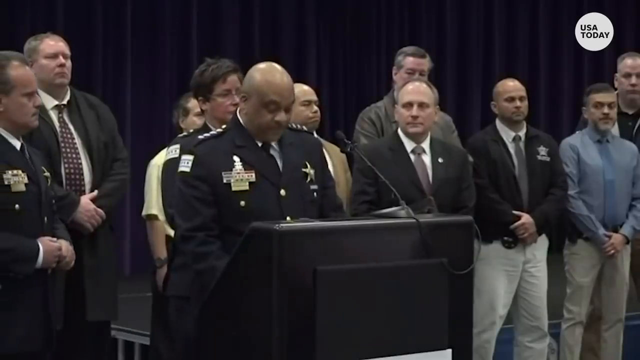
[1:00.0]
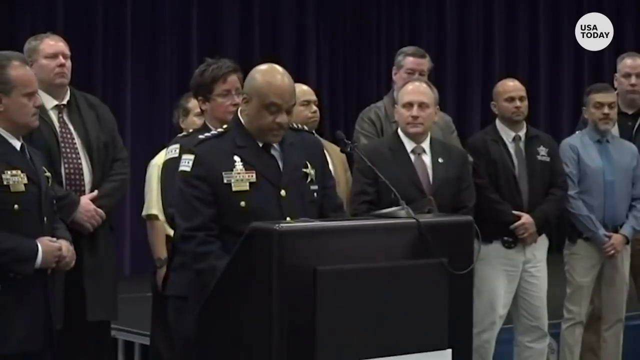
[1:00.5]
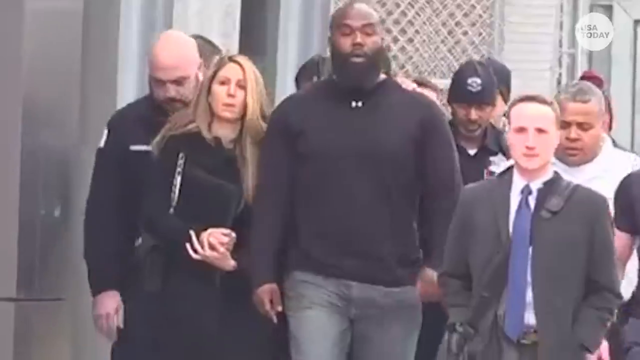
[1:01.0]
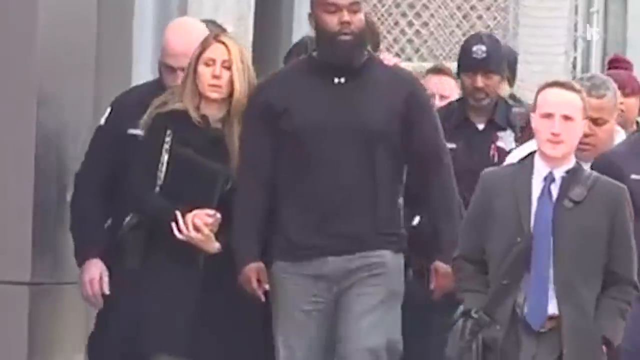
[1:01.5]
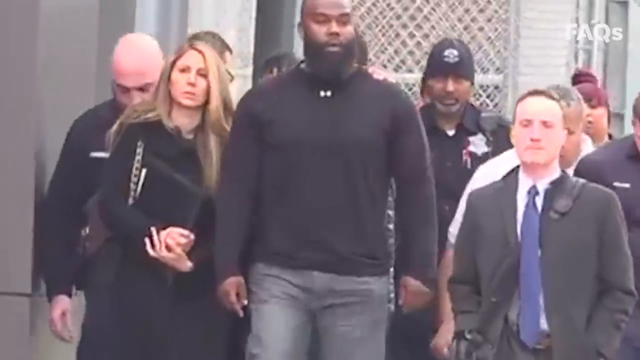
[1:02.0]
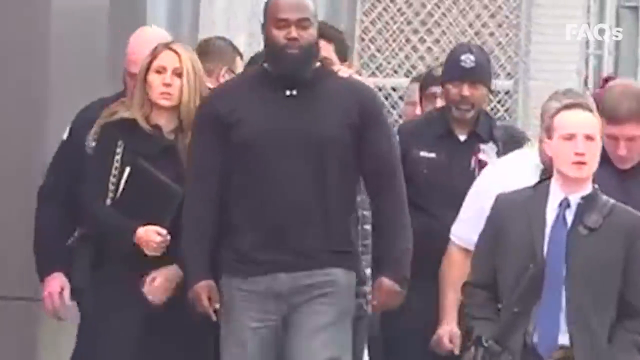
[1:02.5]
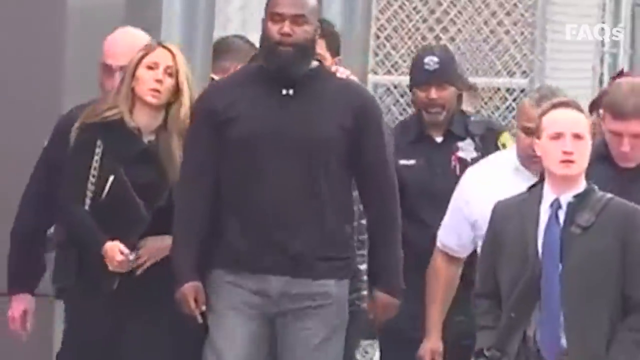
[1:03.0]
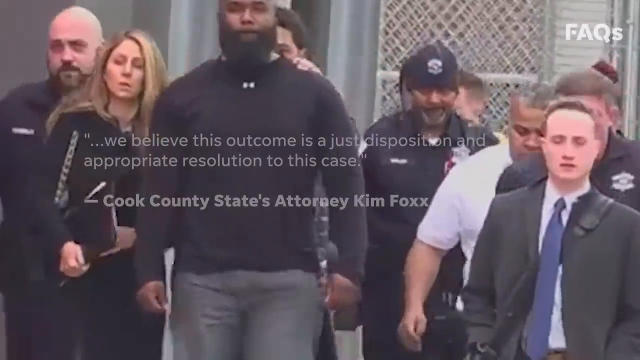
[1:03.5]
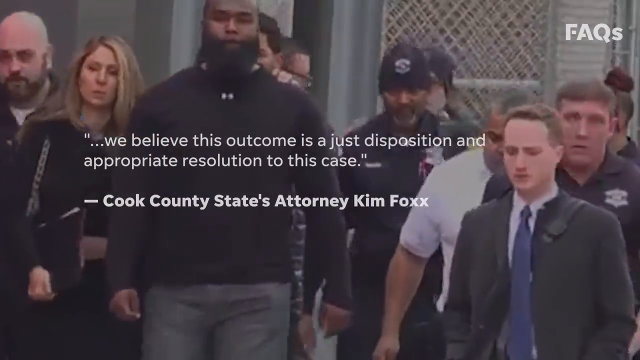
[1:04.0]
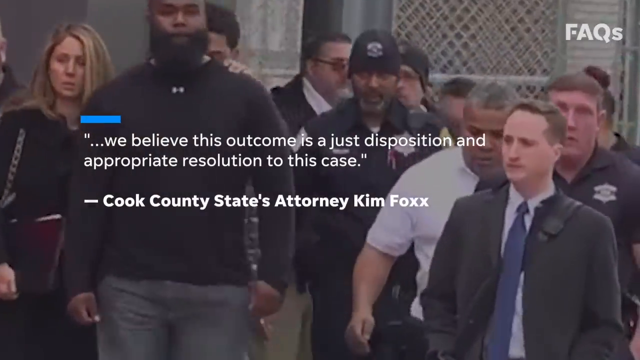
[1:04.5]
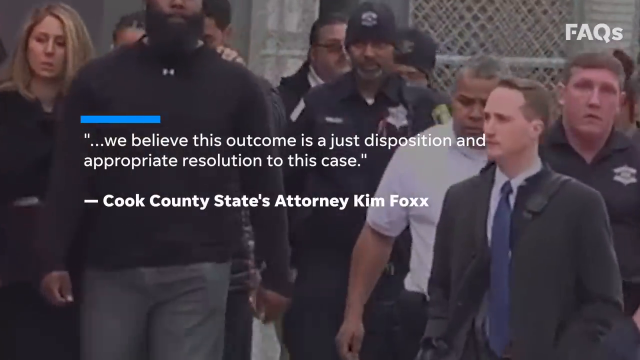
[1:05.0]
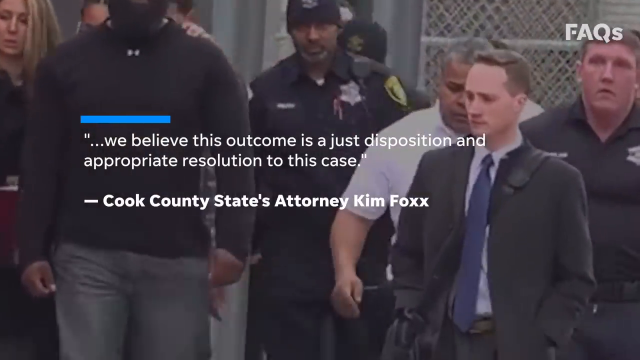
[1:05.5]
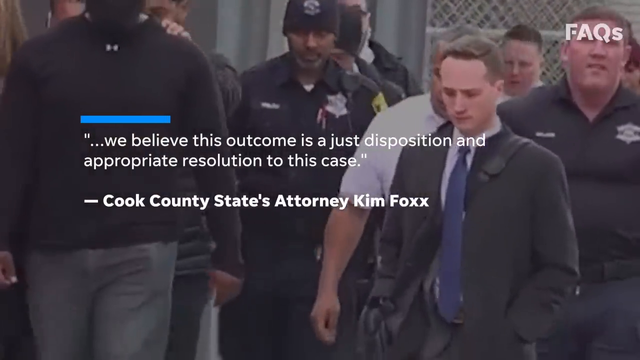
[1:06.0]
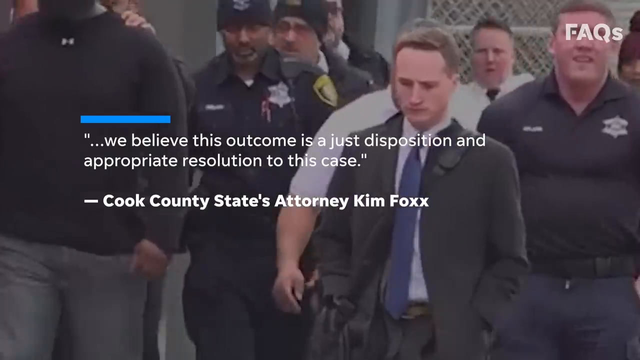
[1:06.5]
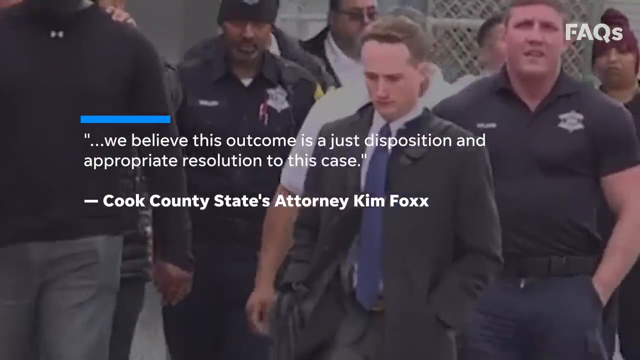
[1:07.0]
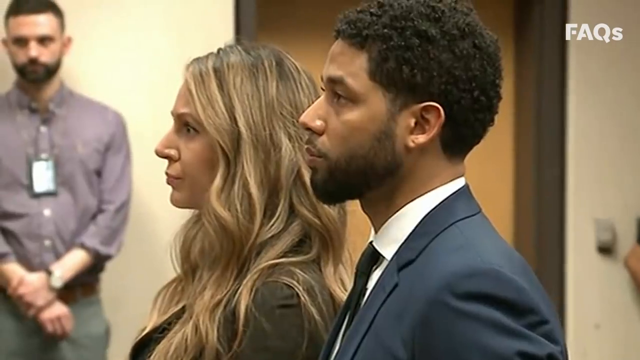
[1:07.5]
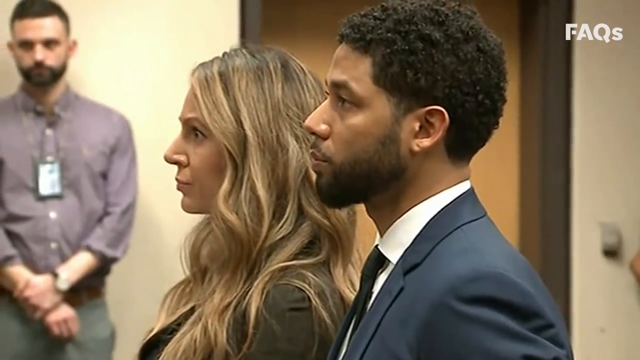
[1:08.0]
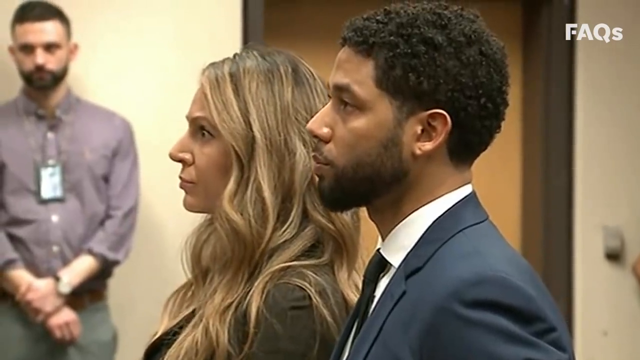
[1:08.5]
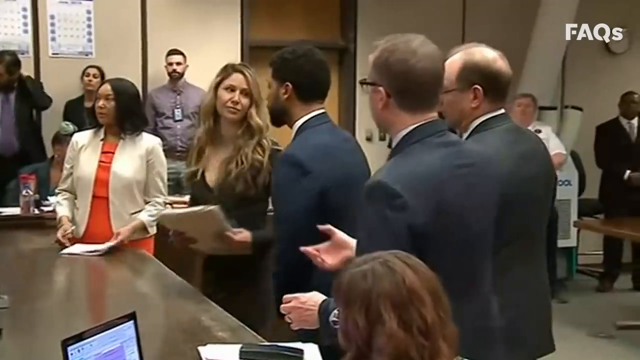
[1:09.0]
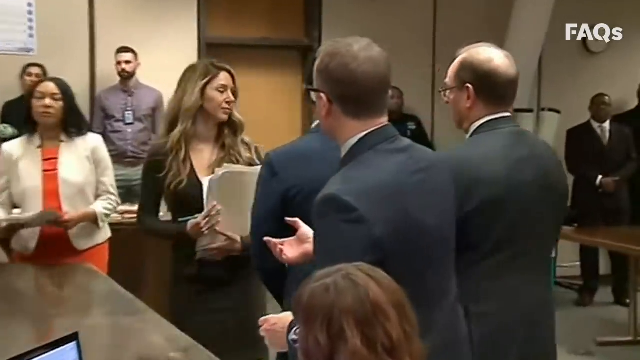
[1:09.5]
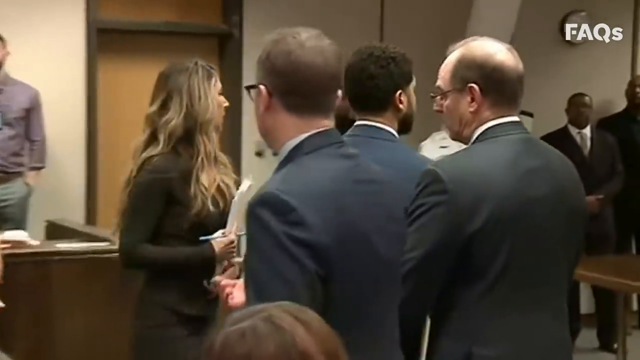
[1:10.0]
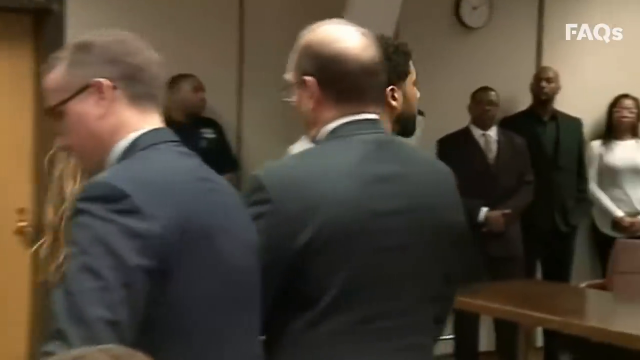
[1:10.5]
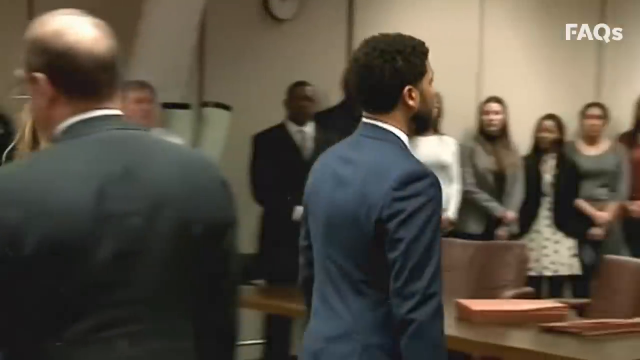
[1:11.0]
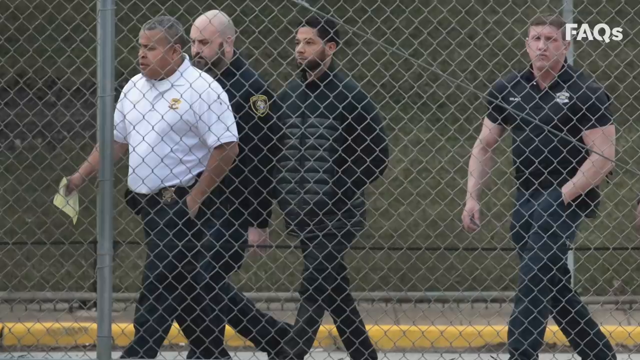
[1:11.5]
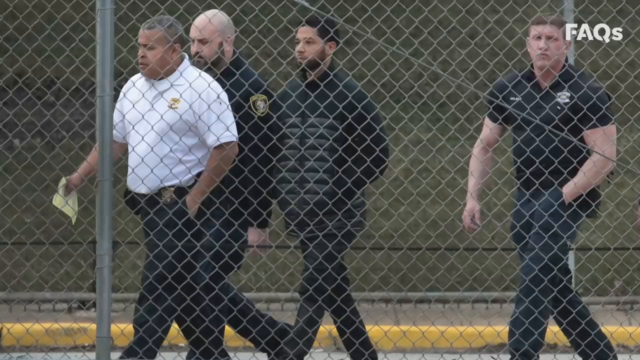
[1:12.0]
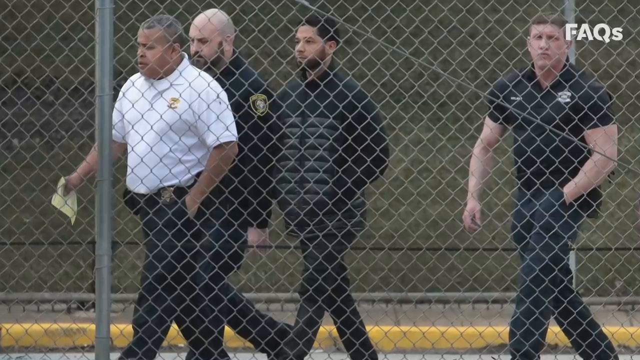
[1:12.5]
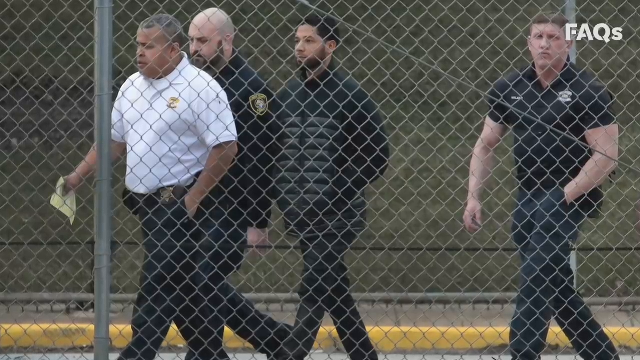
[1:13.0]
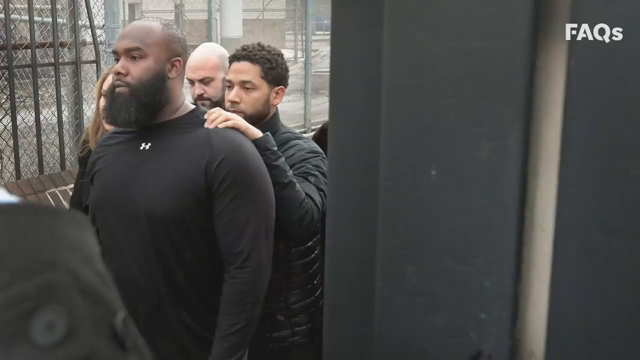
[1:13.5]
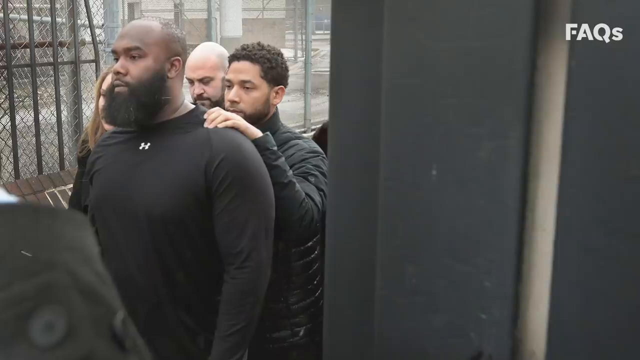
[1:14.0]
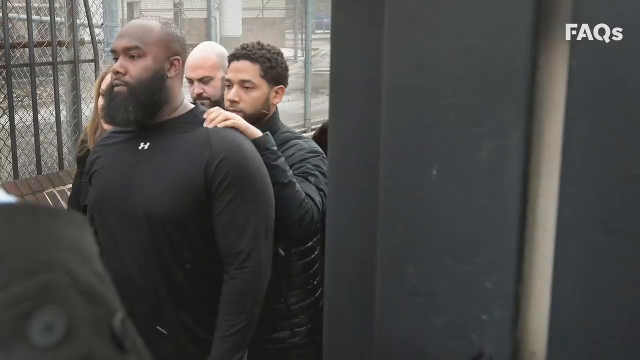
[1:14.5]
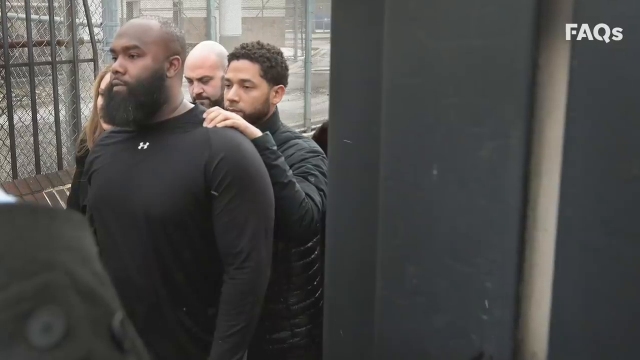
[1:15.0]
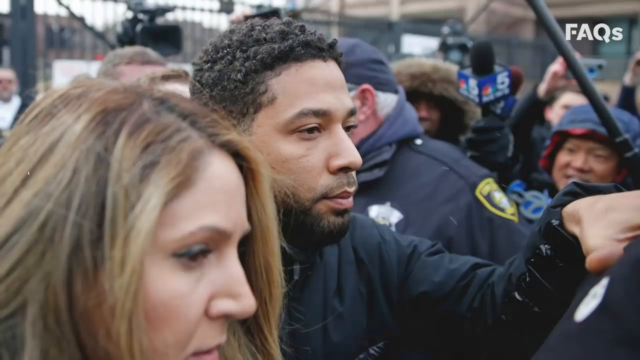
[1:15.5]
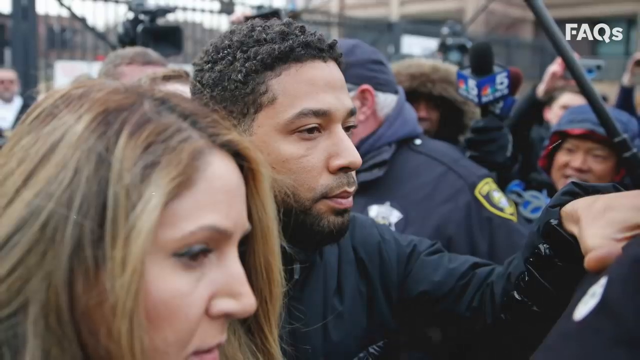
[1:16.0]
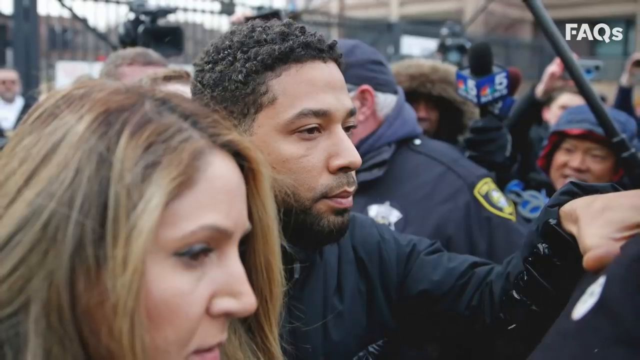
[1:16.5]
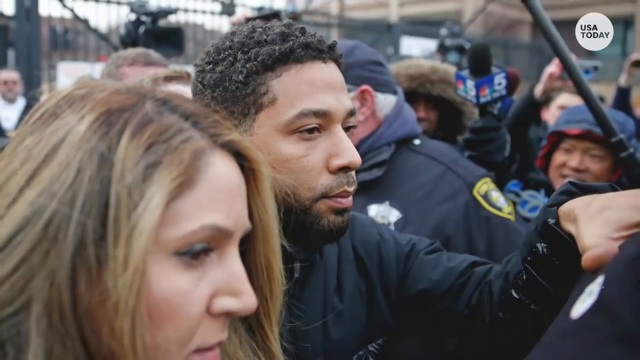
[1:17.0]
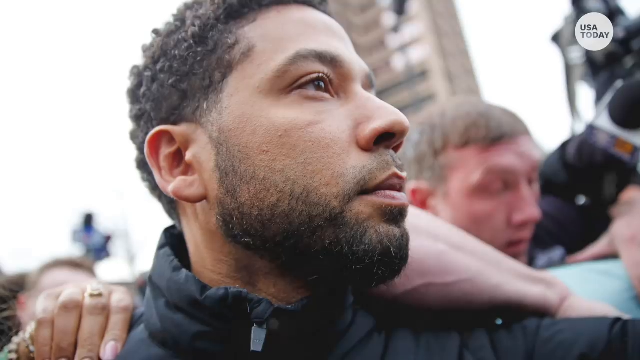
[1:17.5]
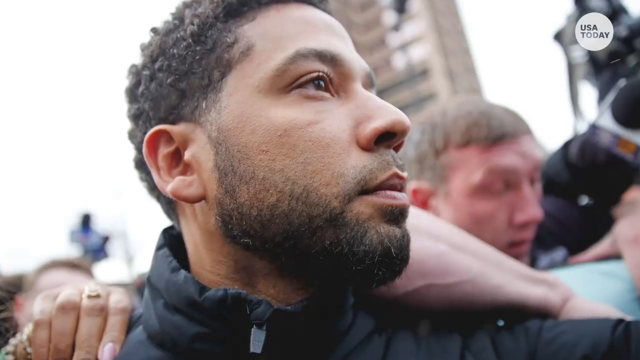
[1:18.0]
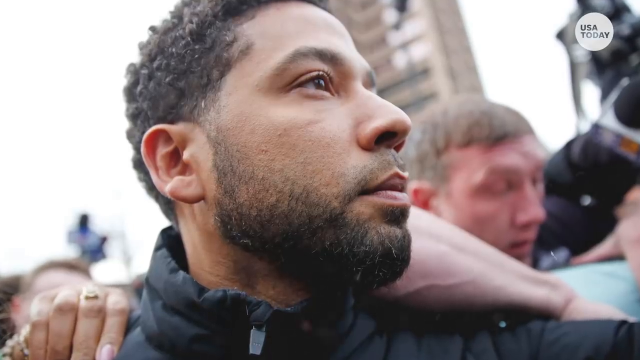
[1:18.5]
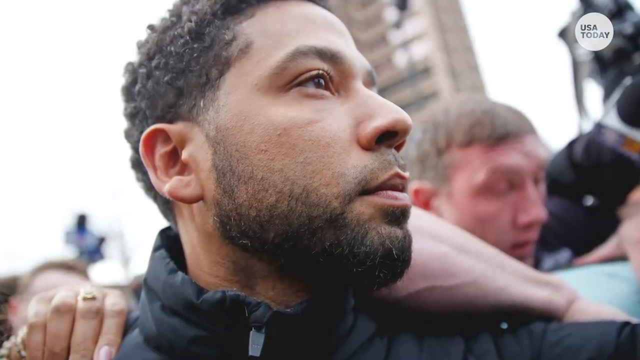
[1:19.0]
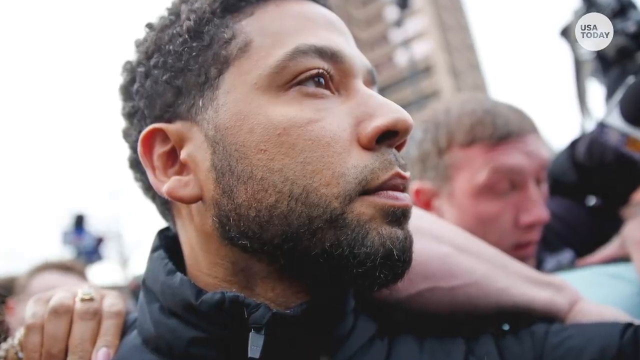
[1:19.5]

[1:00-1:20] From the channel USA Today, a black woman in police uniform gives a speech at what looks to be a press conference, with a number of colleagues in the background looking on; they are formally dressed and look attentive. A heavily built black man then walks in the street with a number of people, some formally dressed and others not, all with serious faces. A quote appears that begins "we believe this outcome is a just," attributed to Cook County State Attorney Kim Fox. A young black man, formally dressed, is then with what looks to be his lawyer, looking attentive to what appear to be court proceedings. They then walk out of the office, and the young man walks with what look to be police officials surrounding him.